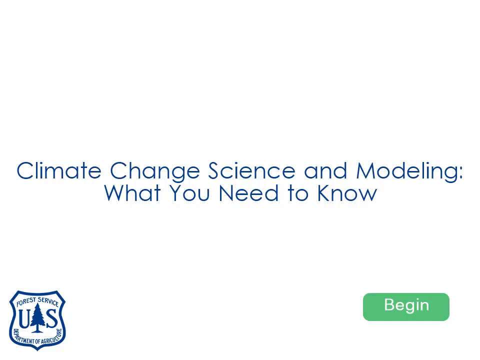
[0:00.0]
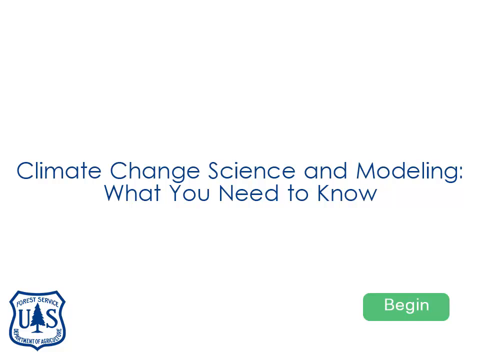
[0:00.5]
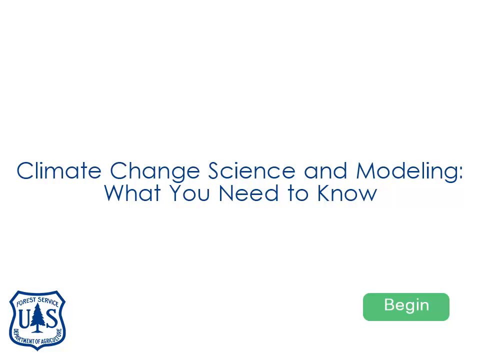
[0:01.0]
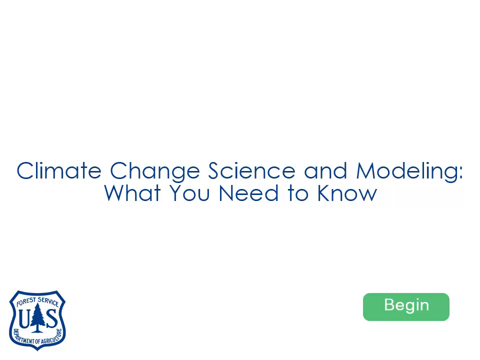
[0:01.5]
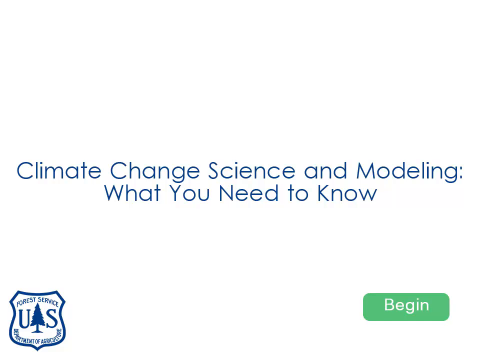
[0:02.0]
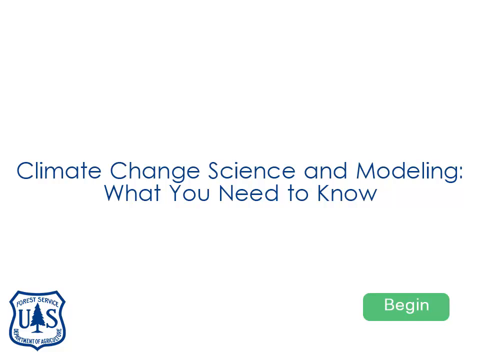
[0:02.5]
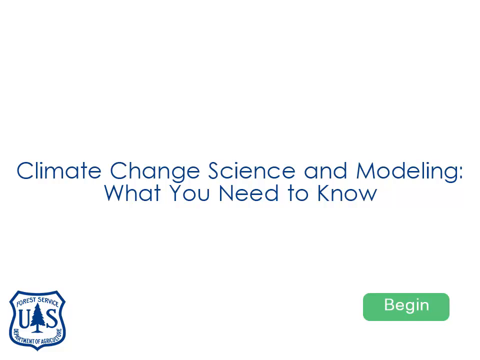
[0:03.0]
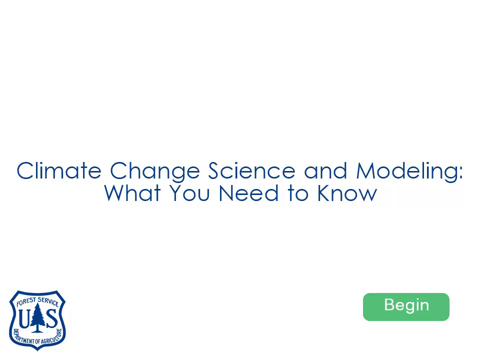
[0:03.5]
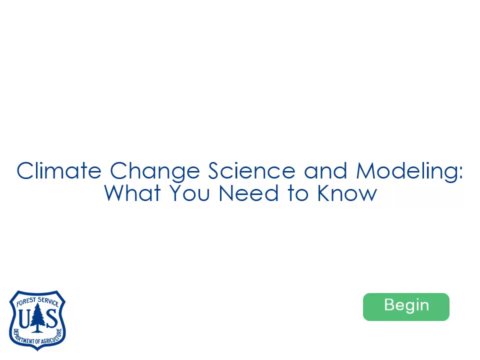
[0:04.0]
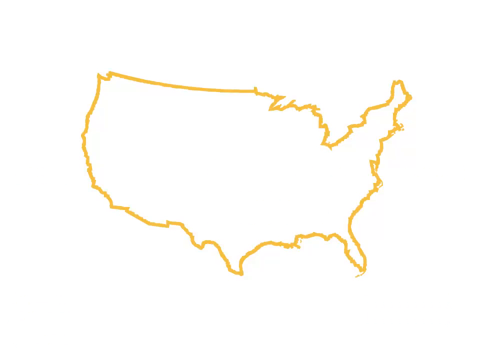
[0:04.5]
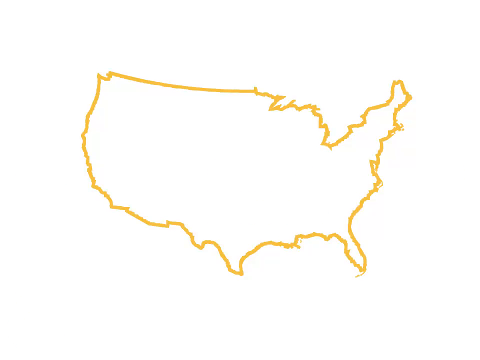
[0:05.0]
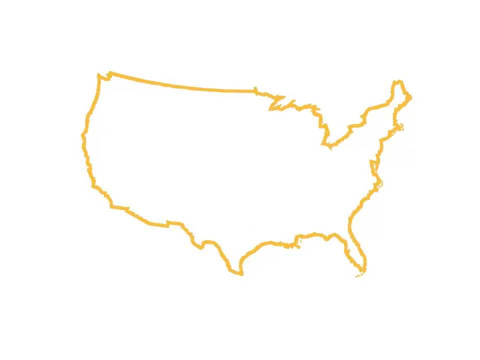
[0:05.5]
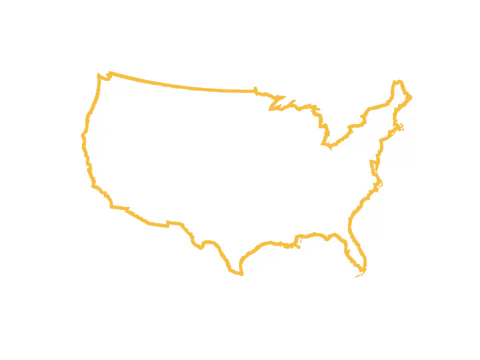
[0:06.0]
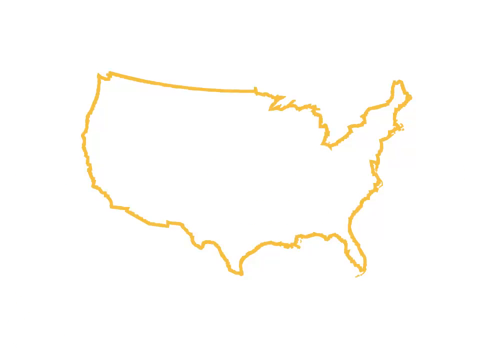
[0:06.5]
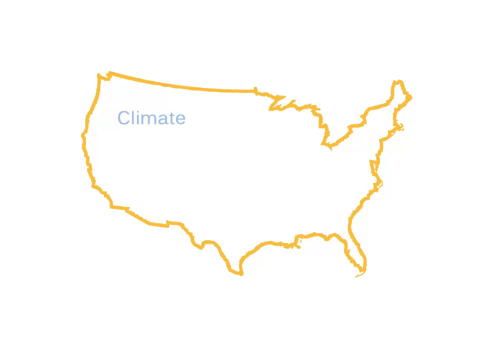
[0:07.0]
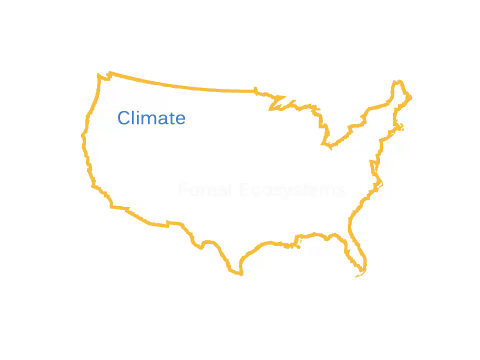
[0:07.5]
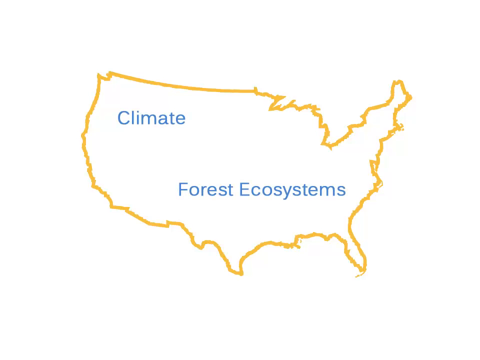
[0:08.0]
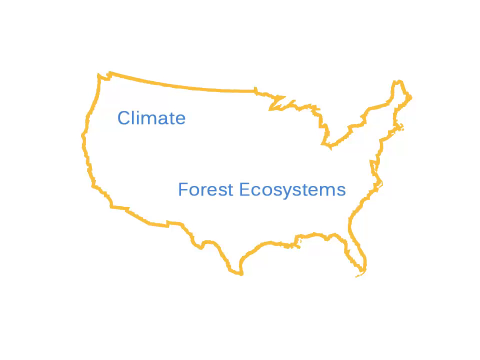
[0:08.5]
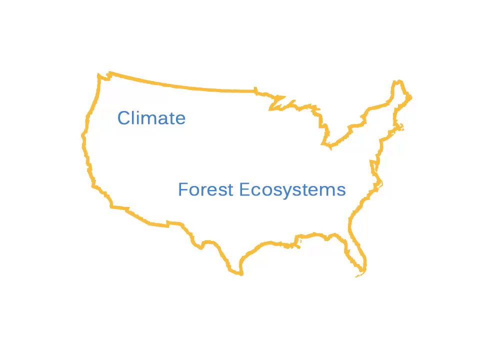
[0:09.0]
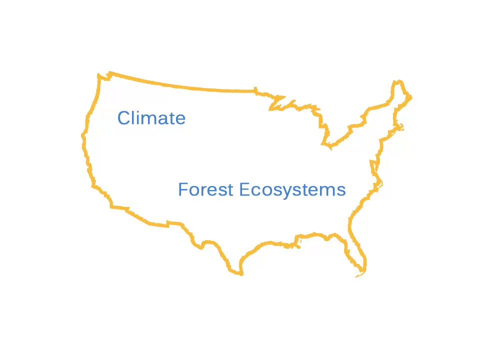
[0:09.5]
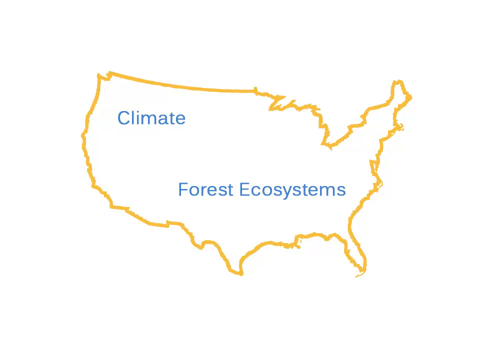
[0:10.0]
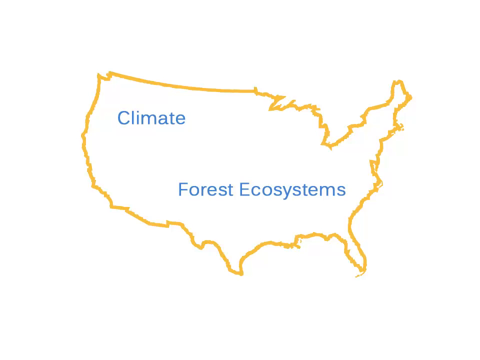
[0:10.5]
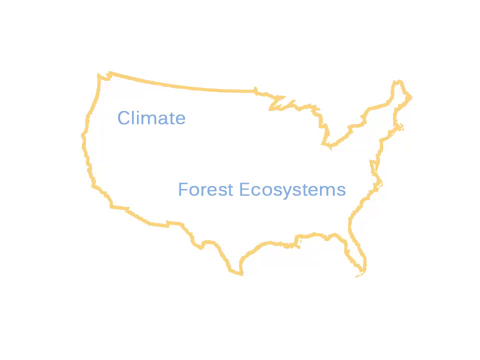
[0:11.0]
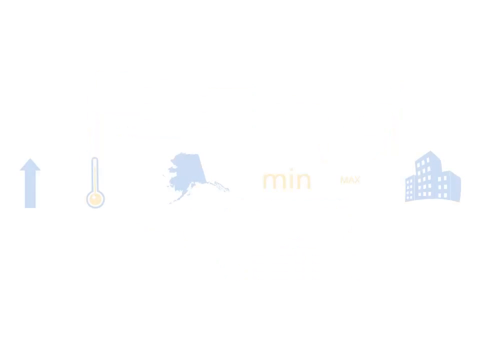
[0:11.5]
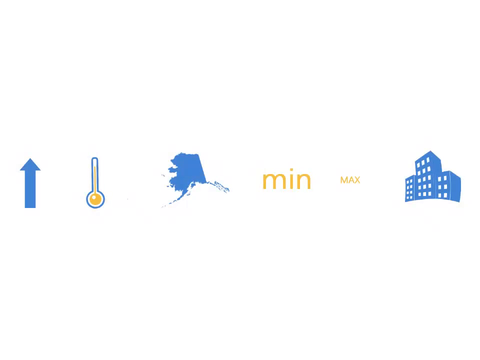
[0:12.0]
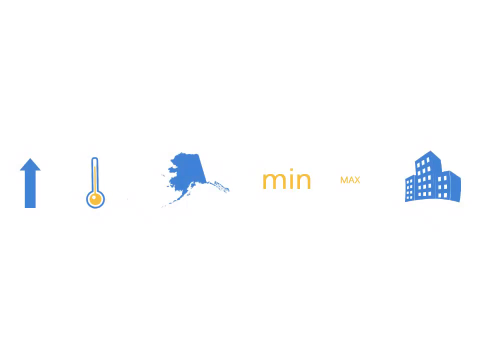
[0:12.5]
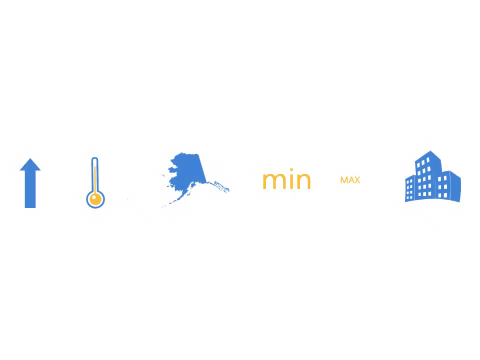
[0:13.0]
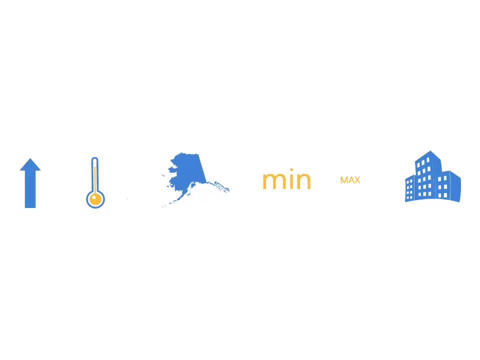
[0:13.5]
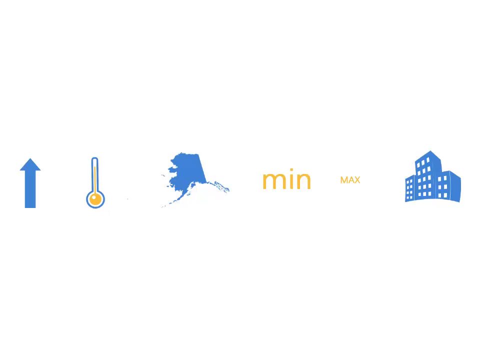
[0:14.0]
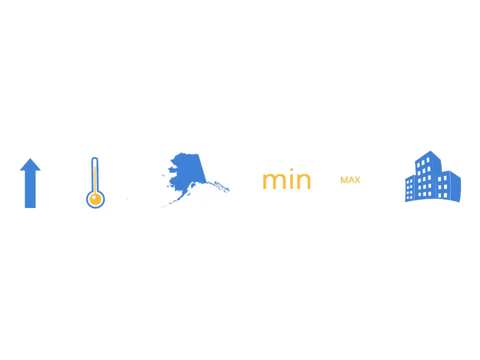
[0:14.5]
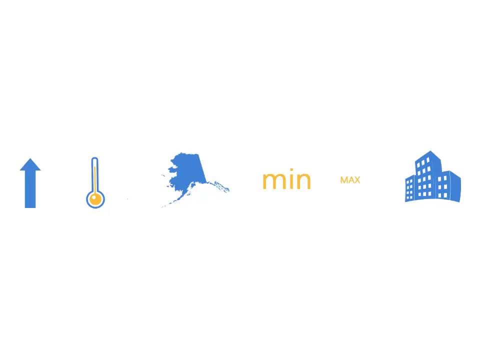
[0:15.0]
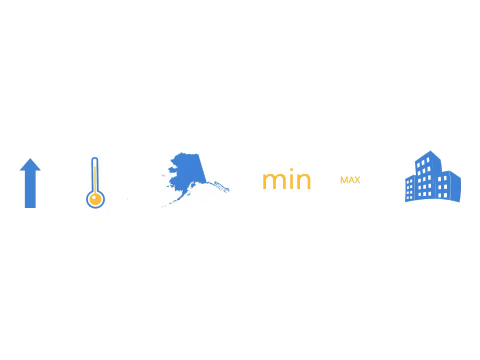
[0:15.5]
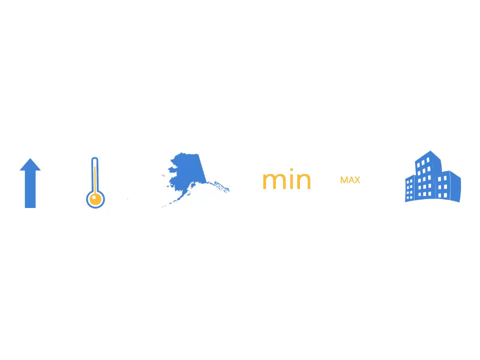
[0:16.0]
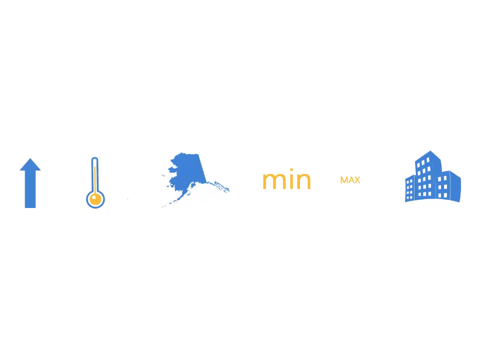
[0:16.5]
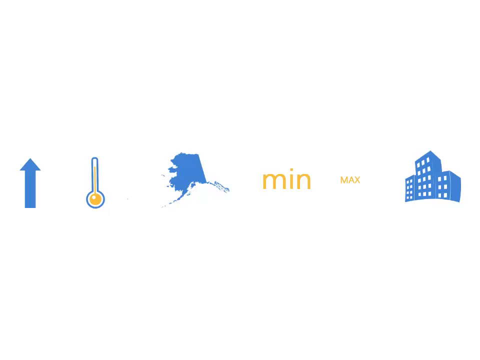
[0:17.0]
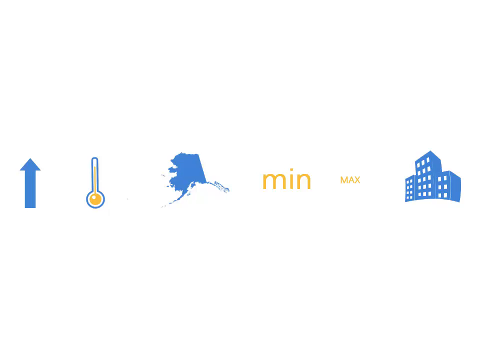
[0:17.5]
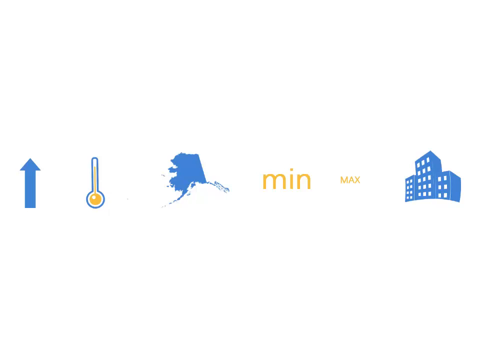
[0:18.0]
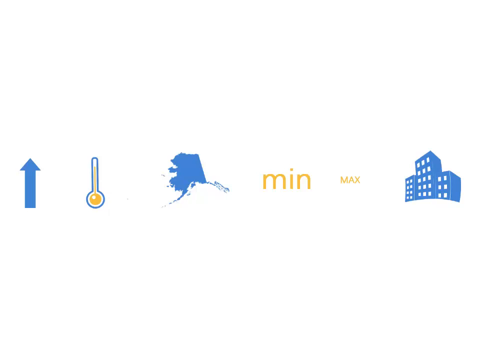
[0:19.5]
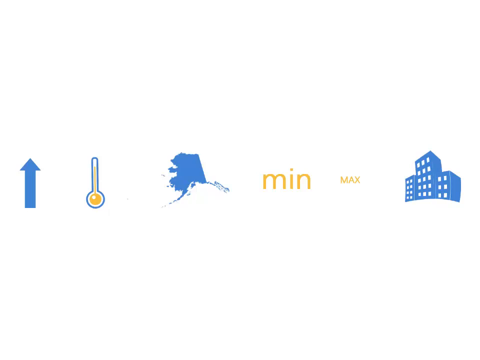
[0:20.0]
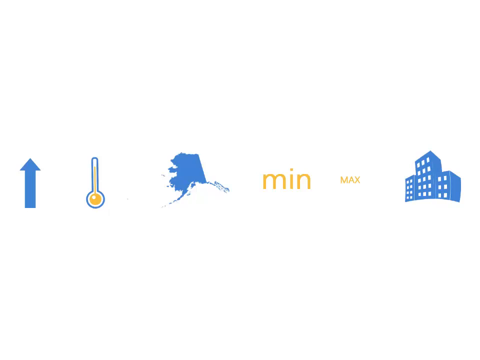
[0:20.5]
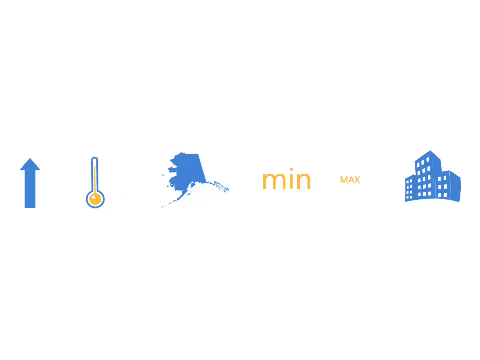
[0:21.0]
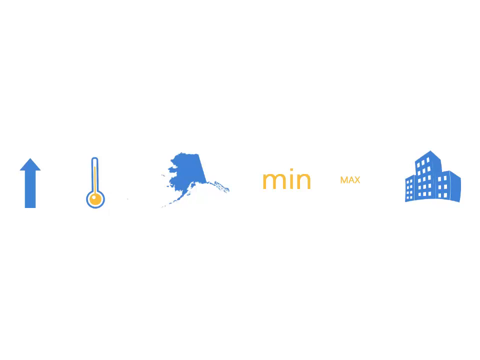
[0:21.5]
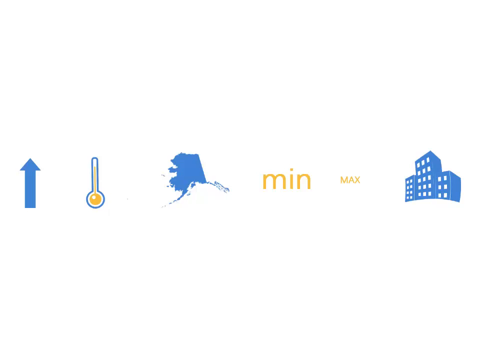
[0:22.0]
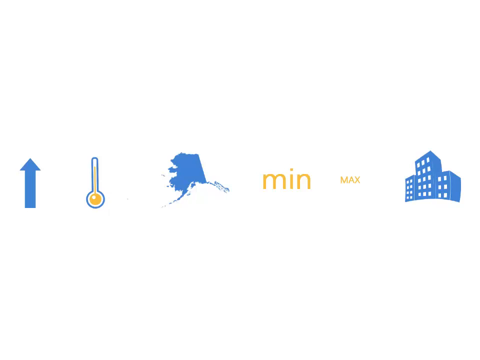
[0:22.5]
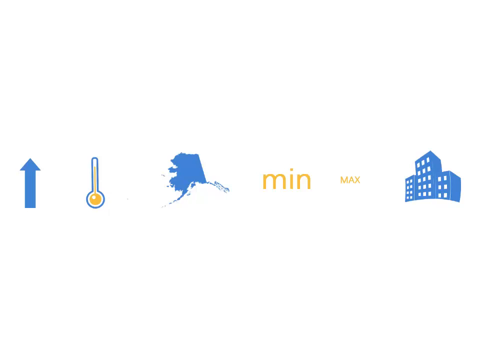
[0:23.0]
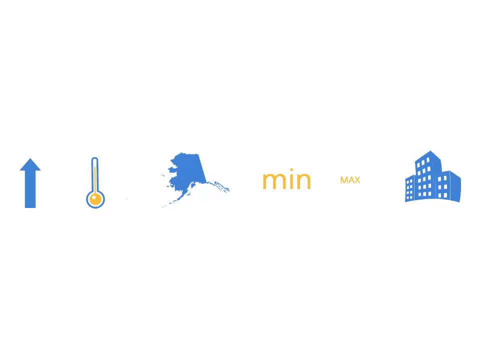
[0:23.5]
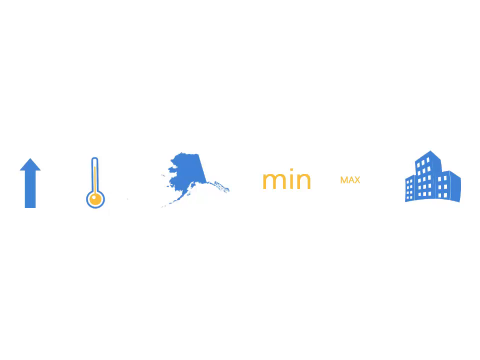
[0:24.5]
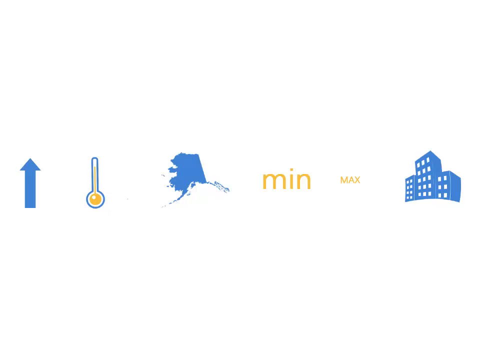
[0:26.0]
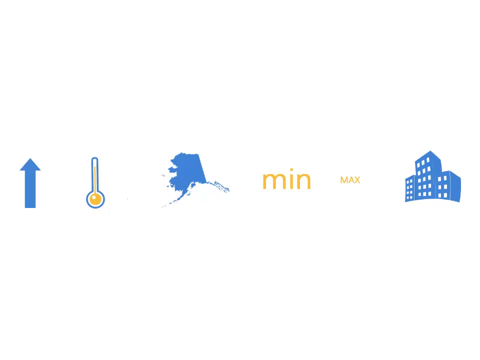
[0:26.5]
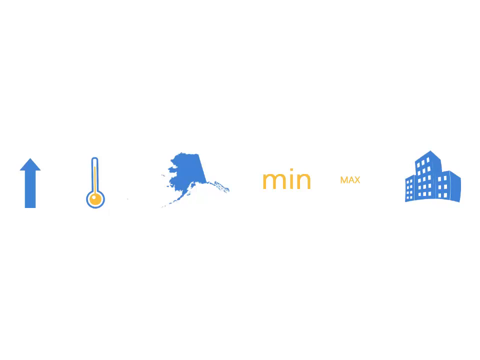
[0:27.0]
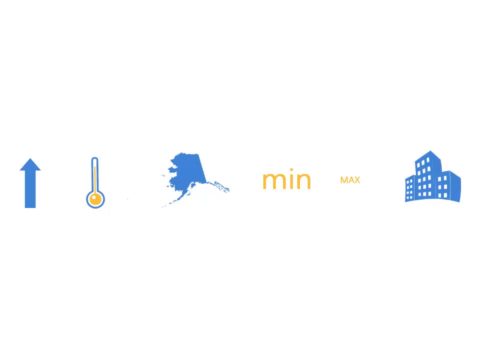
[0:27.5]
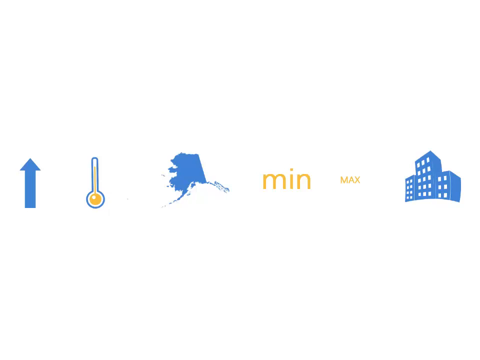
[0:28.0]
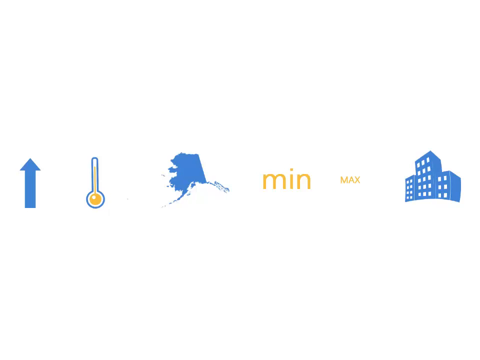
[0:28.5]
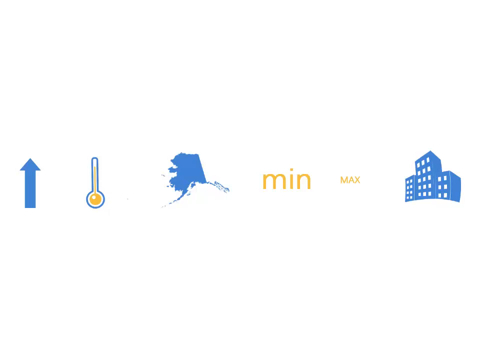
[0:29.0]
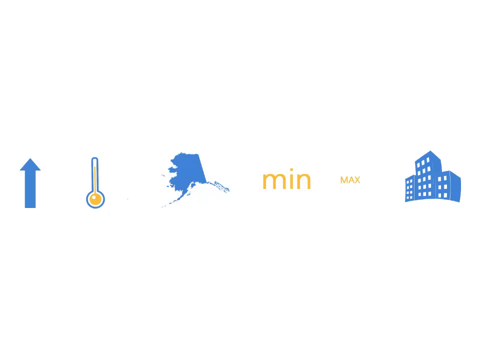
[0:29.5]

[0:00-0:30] The video opens on a title page reading "climate change, science and modelling, what you need to know". In the bottom left corner is a shield logo reading "Forest Service", with an image of a tree in blue and the letters U and S on either side; underneath, the text apparently reads "Department of Agriculture". In the bottom right corner is a green button reading "begin". Next, on a white background, is the outline of a map of America with a blank interior. At the top of the inside of the map, "climate" appears in blue type, and at the bottom is "forest ecosystems". Then a white screen shows a number of images: toward the centre left is a blue upward arrow, to its right a thermometer or barometer with a blue outline, then what looks to be a silhouette of Alaska in blue, then the word "min" in orange, then "MAX" in capitals, and furthest right three buildings shown in blue. The video holds on this page for several seconds with no changes.